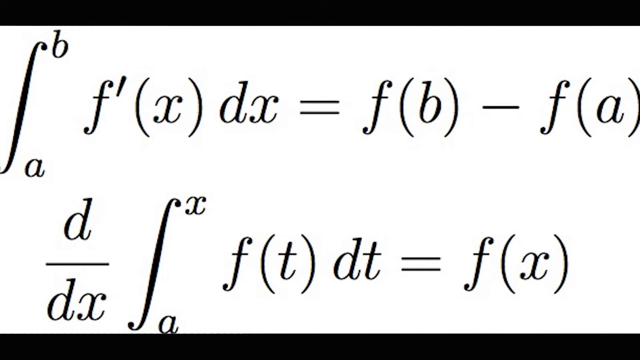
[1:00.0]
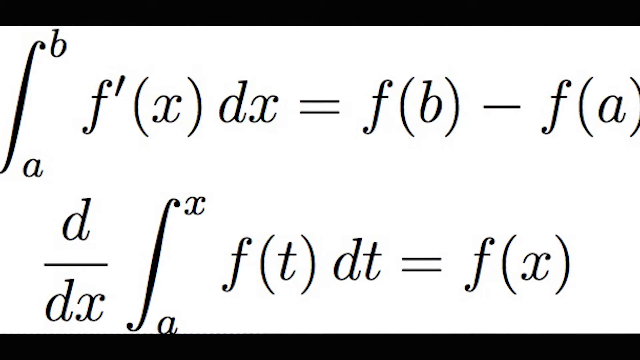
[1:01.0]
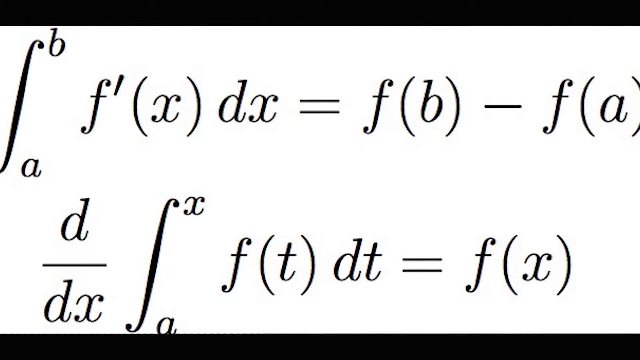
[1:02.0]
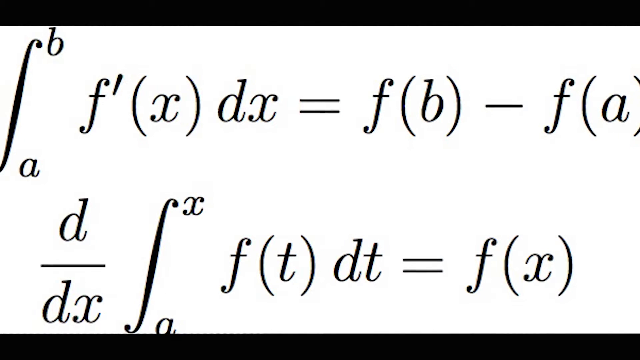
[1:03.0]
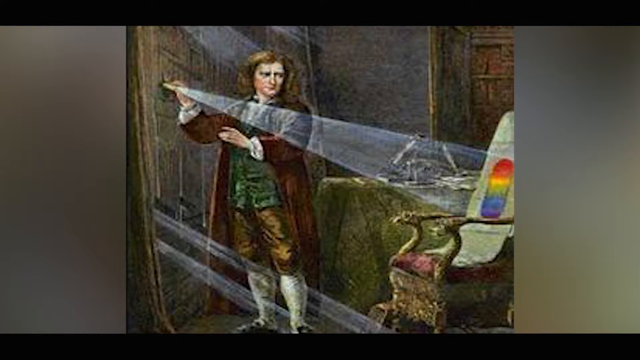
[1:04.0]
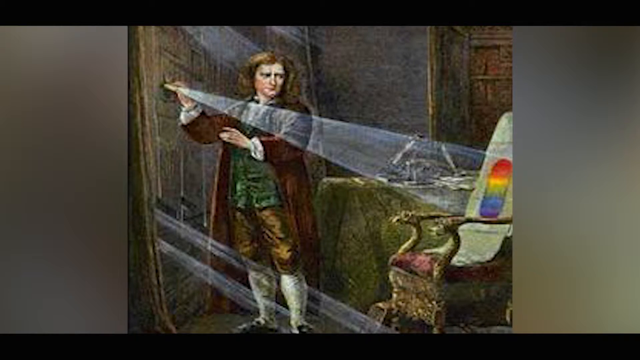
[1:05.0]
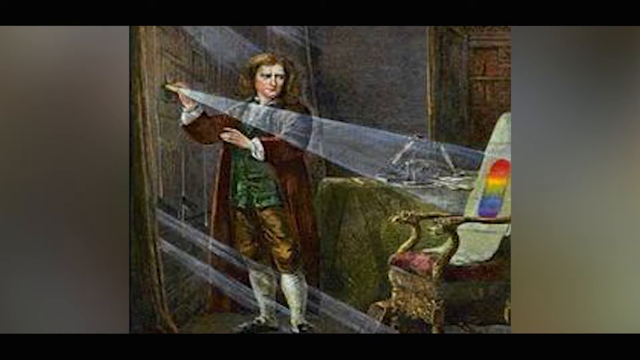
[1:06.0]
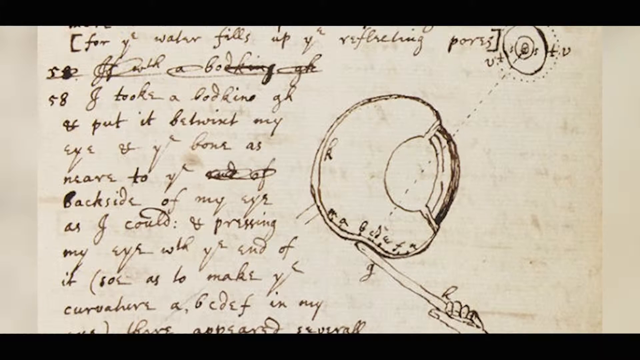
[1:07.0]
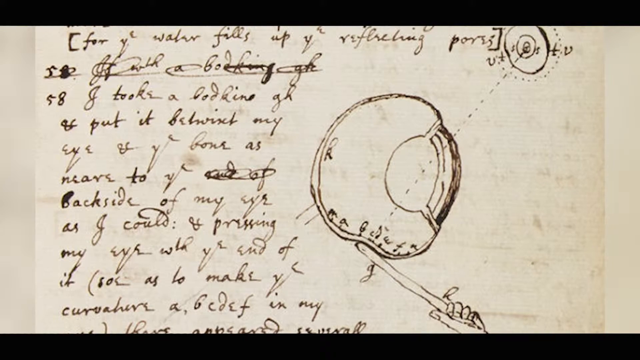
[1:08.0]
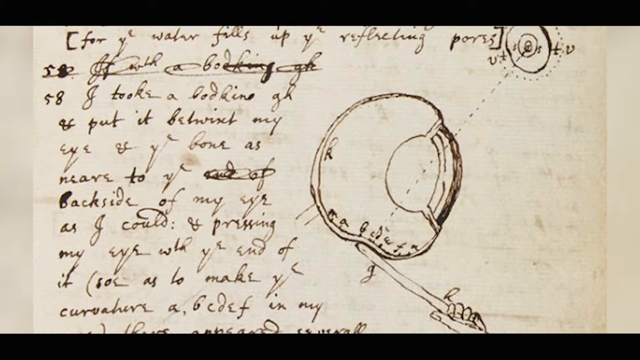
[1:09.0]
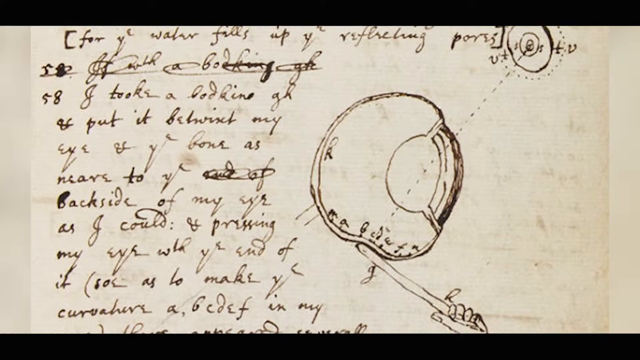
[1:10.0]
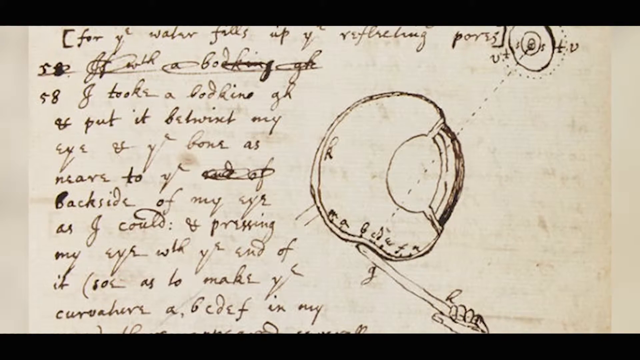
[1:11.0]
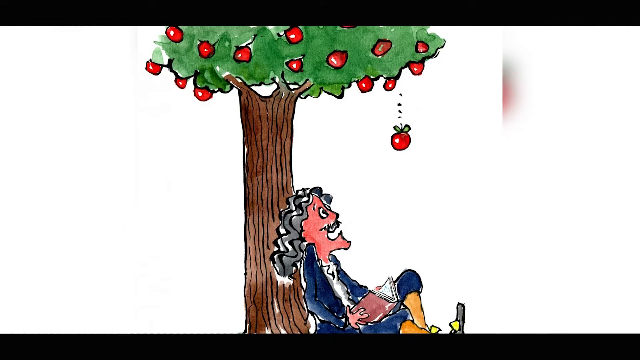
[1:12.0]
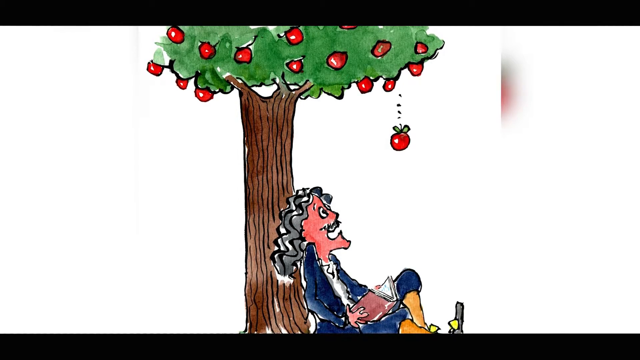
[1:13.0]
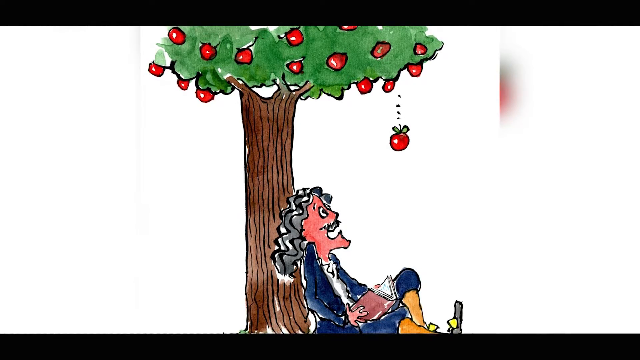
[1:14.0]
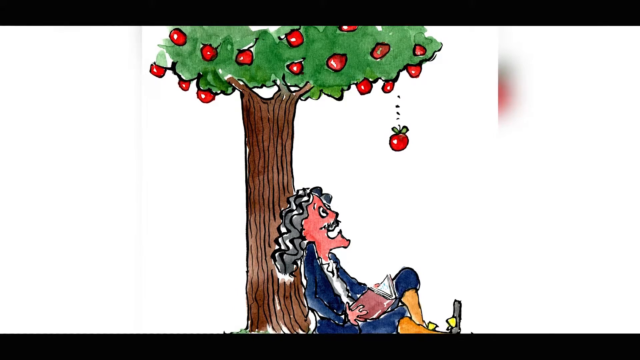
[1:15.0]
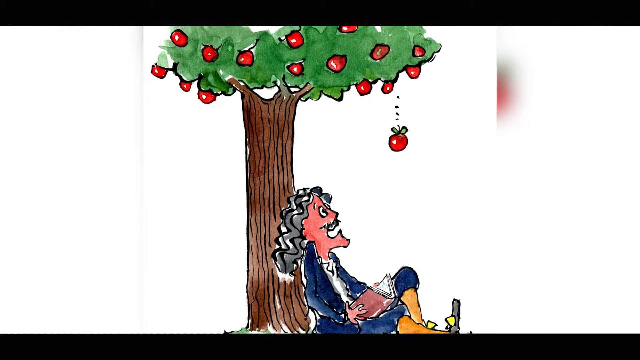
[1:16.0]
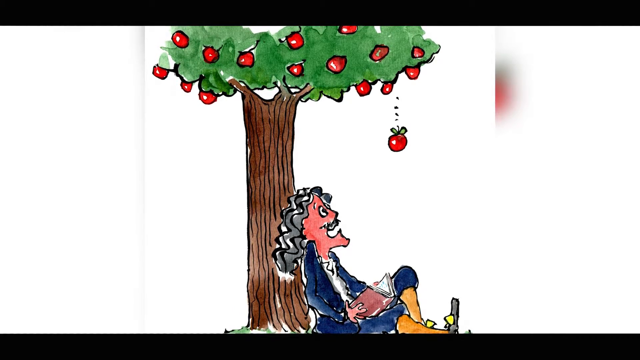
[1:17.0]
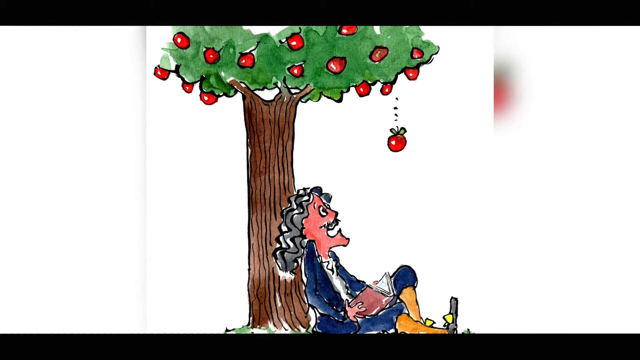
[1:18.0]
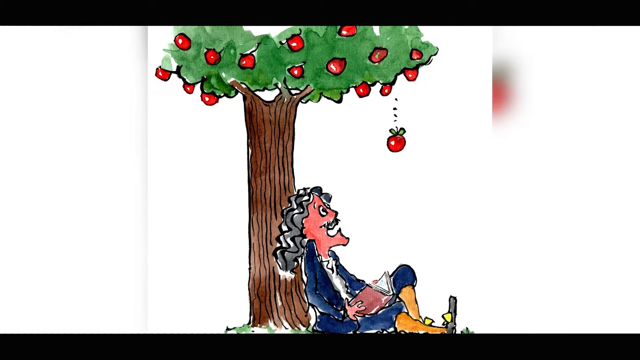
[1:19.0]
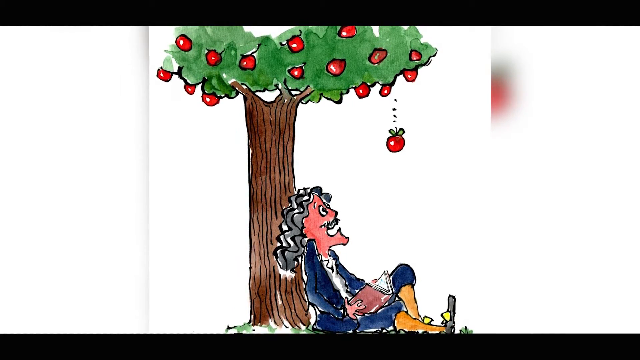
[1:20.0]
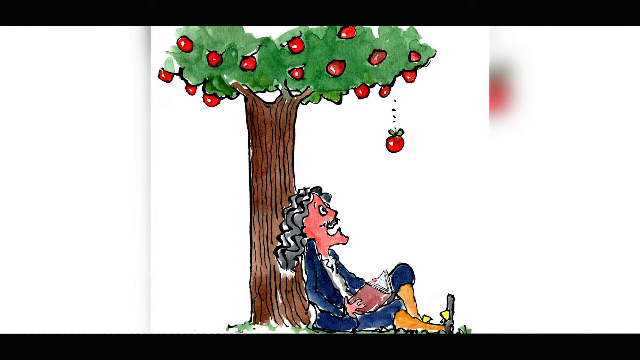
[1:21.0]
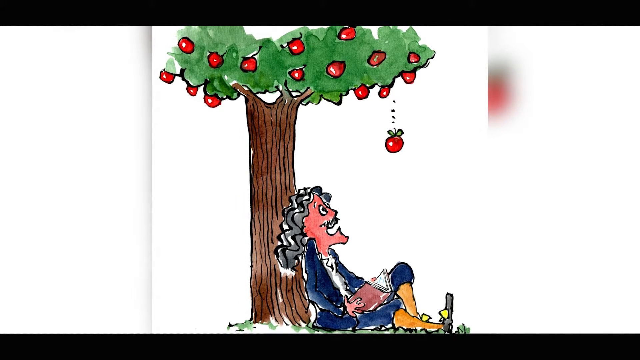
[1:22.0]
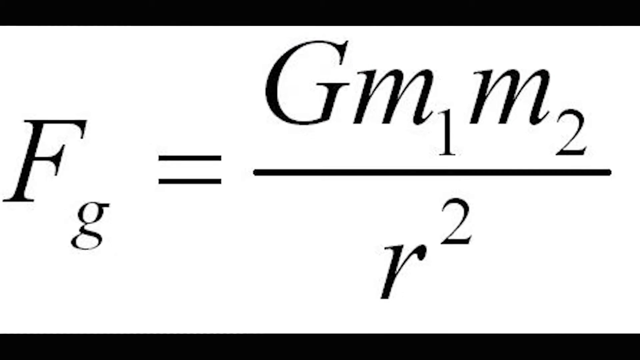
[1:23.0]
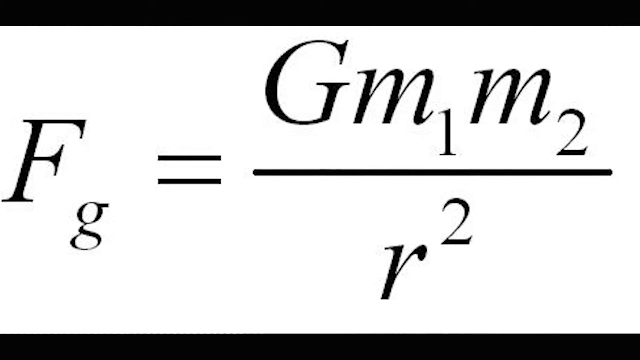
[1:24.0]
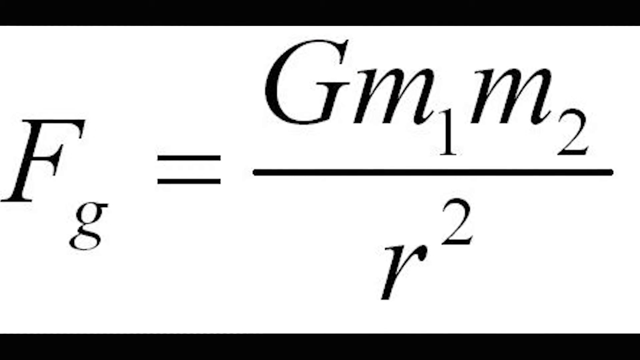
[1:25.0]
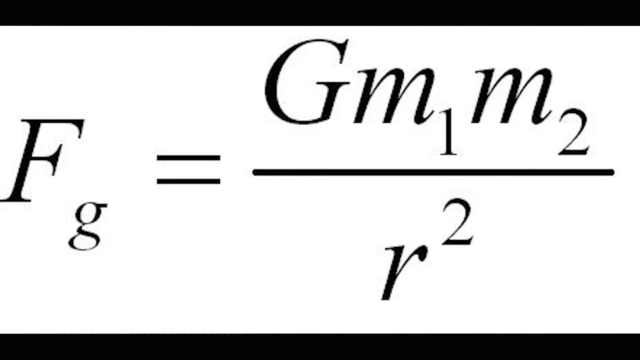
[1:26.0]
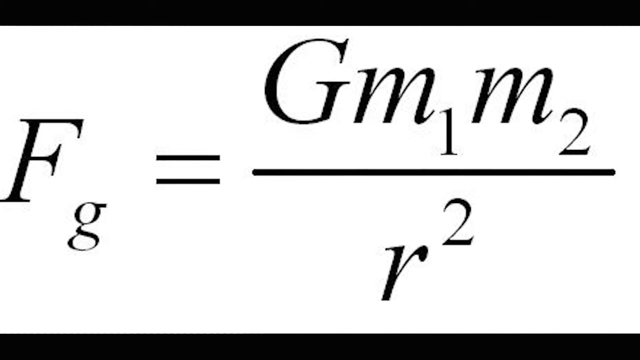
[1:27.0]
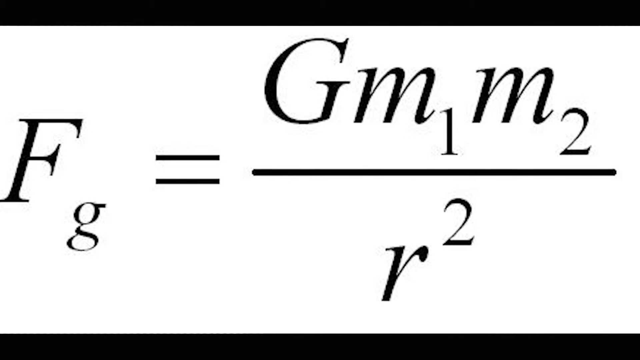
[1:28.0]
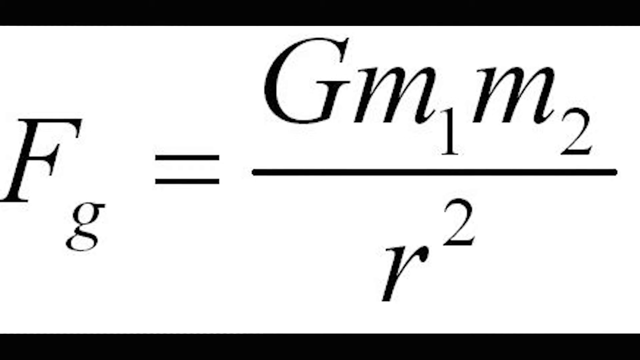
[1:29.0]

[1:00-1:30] Equations with integral signs appear. A man holds a light that is reflected on an object on a chair, and rainbow-like colors of red, orange, yellow, green, blue, and purple are reflected on the object. Behind the man is a table covered by a green cloth with a microscope on top. The man looks to be in his 40s and wears a brown jacket, long white socks, brown trousers, and a green shirt. Next is a piece of paper that looks old, with what looks like a drawing of an eye and some text written on the left-hand side. A man sits under an apple tree with red apples, holding a book; one apple falls down onto him, and he looks up at it, looking either scared or amazed. An equation then appears: F subscript g equals G m subscript 1 m subscript 2 divided by r to the power of 2.